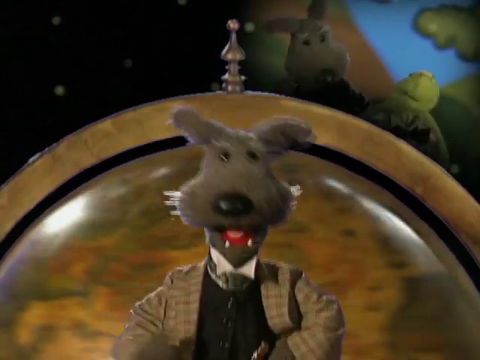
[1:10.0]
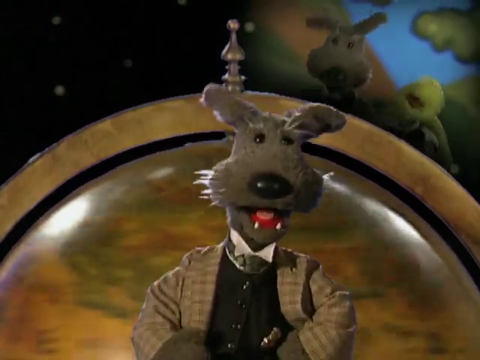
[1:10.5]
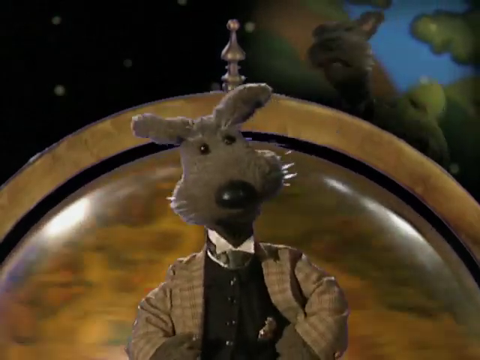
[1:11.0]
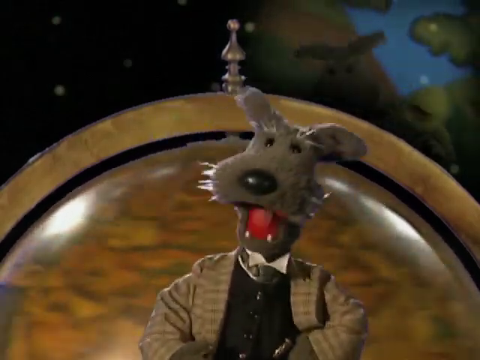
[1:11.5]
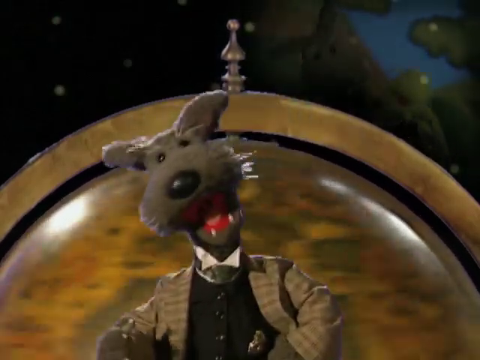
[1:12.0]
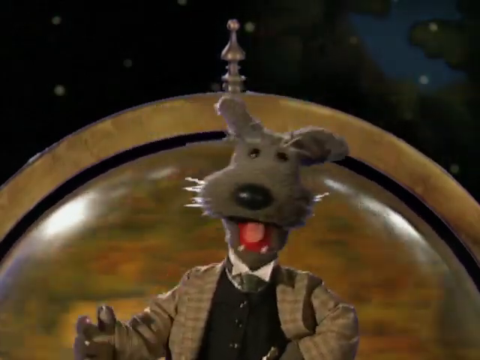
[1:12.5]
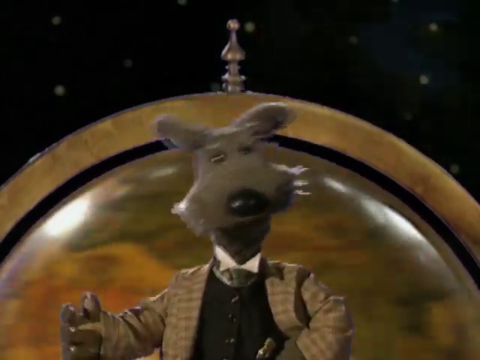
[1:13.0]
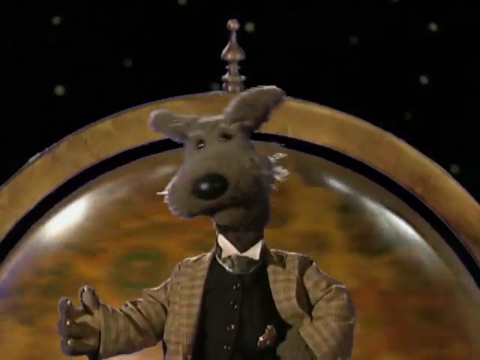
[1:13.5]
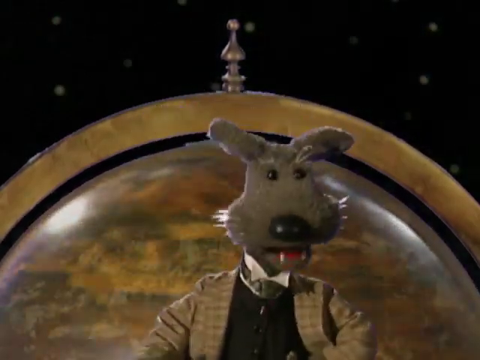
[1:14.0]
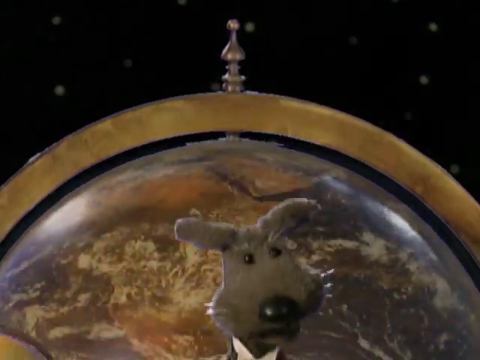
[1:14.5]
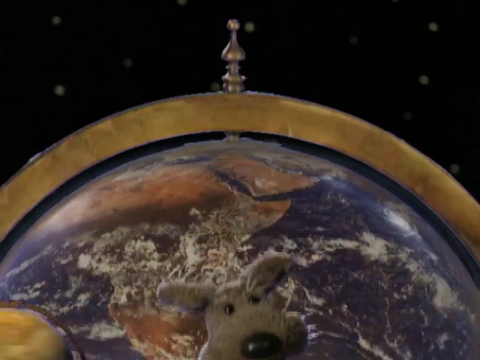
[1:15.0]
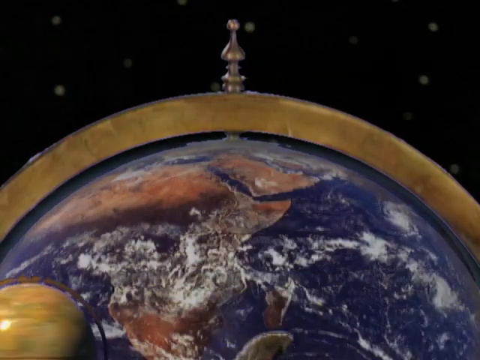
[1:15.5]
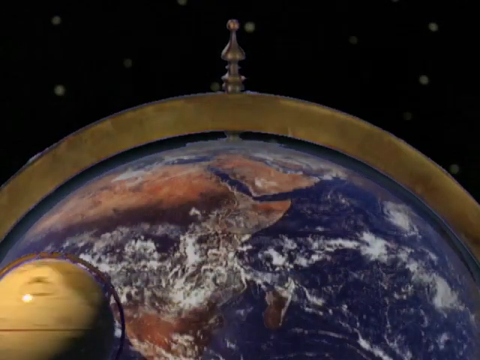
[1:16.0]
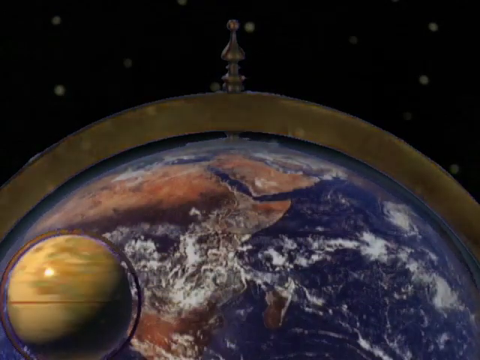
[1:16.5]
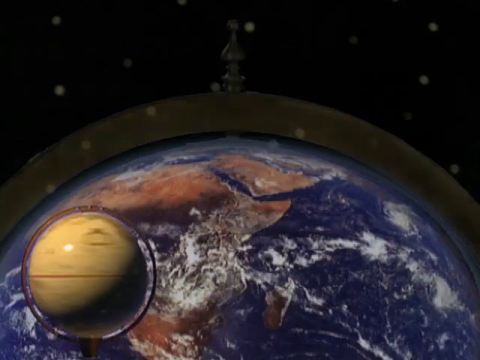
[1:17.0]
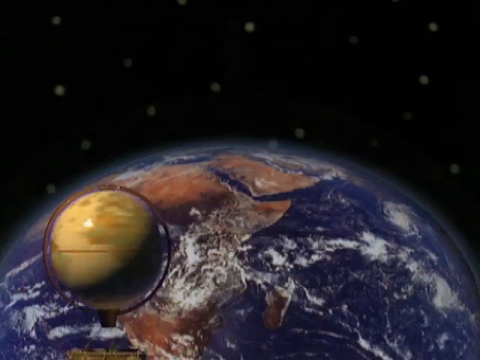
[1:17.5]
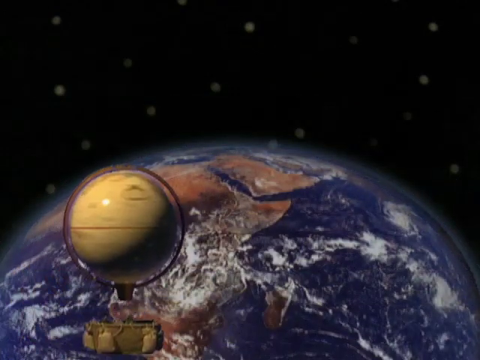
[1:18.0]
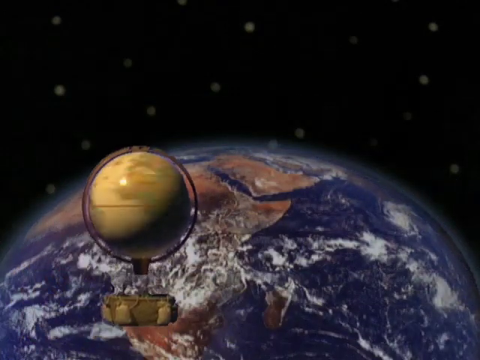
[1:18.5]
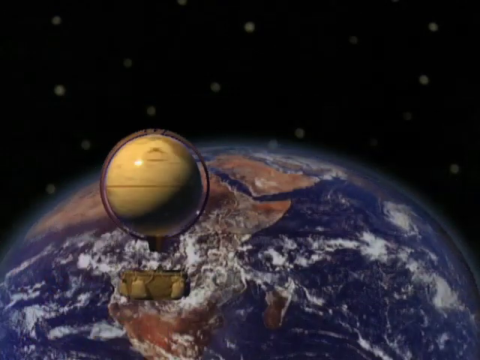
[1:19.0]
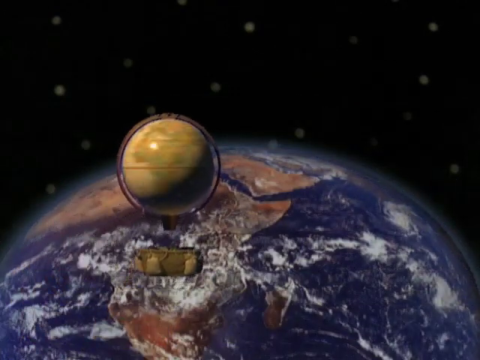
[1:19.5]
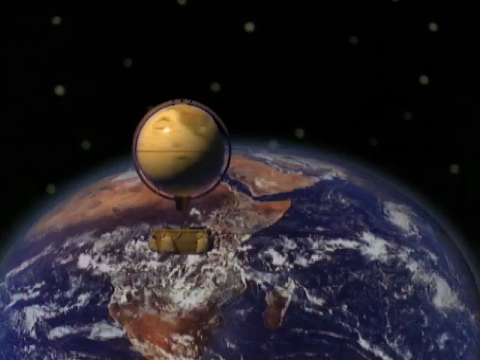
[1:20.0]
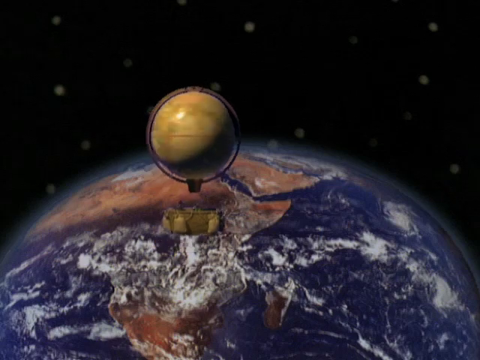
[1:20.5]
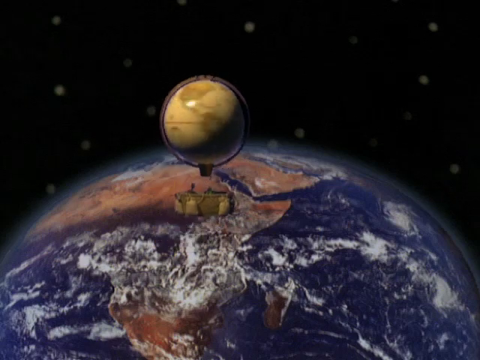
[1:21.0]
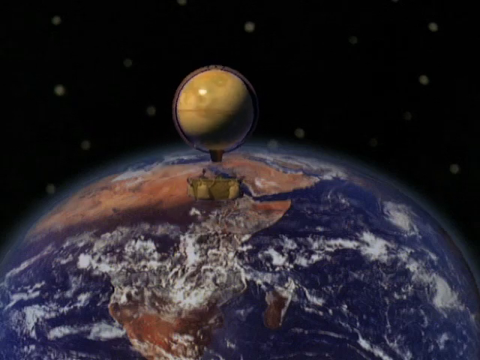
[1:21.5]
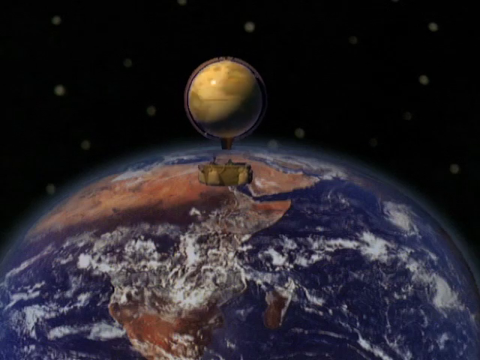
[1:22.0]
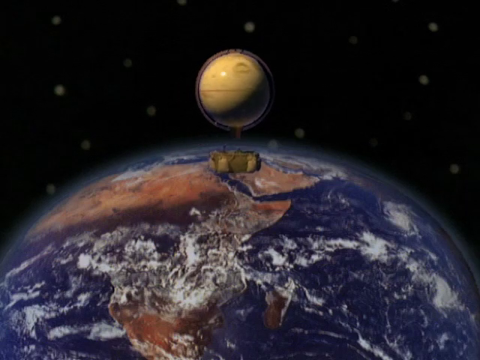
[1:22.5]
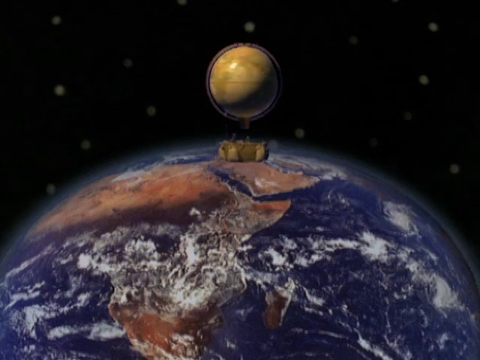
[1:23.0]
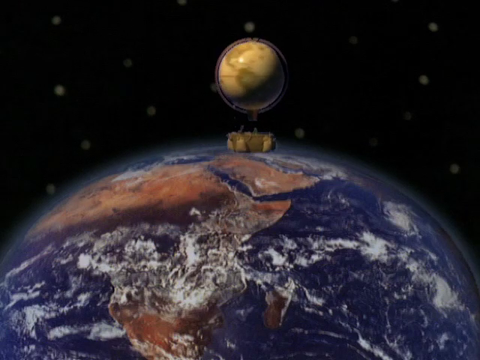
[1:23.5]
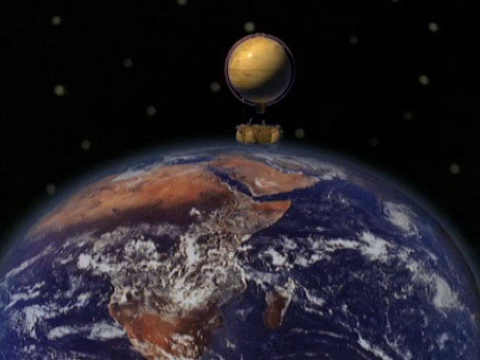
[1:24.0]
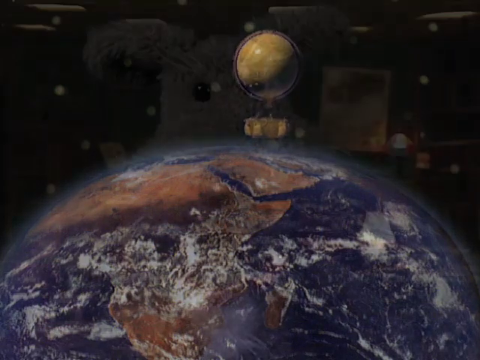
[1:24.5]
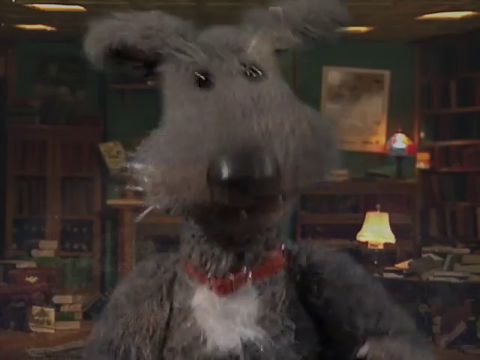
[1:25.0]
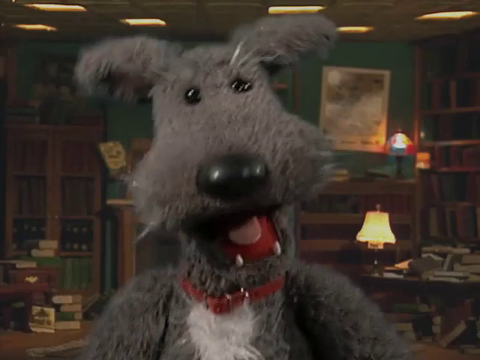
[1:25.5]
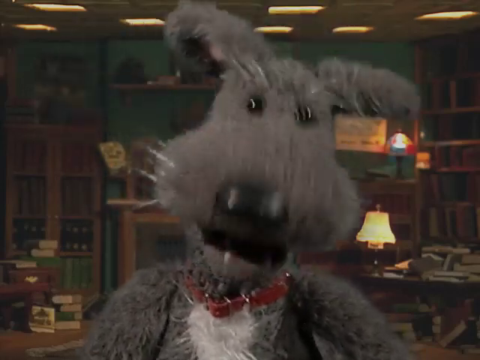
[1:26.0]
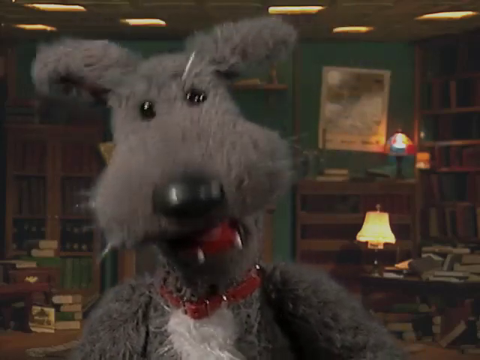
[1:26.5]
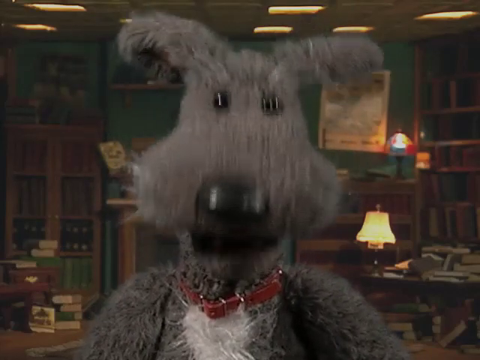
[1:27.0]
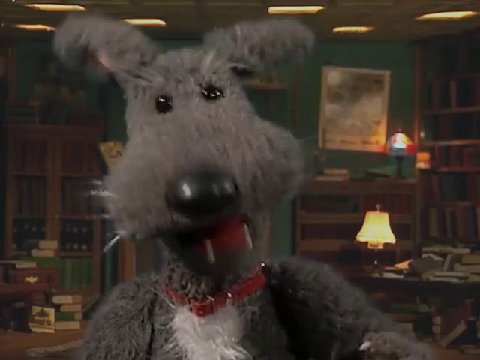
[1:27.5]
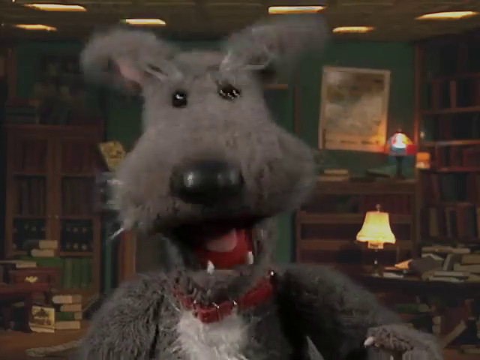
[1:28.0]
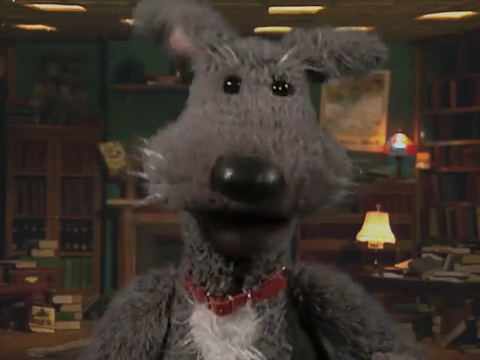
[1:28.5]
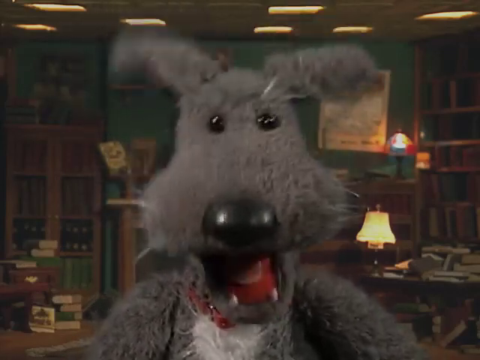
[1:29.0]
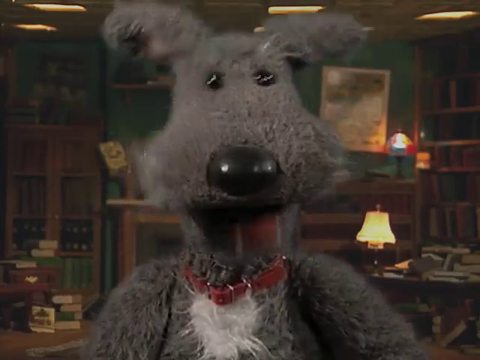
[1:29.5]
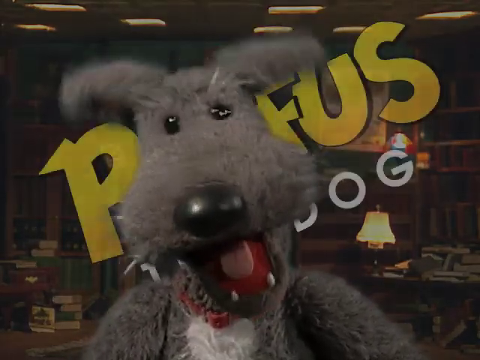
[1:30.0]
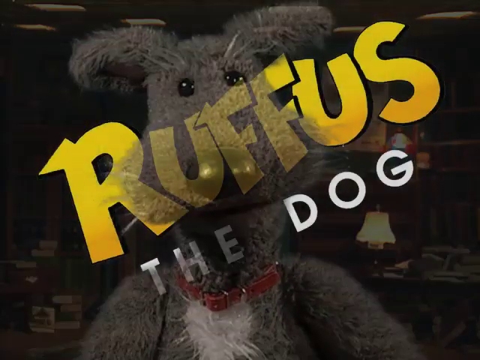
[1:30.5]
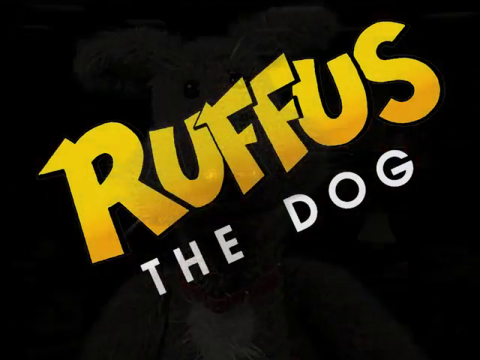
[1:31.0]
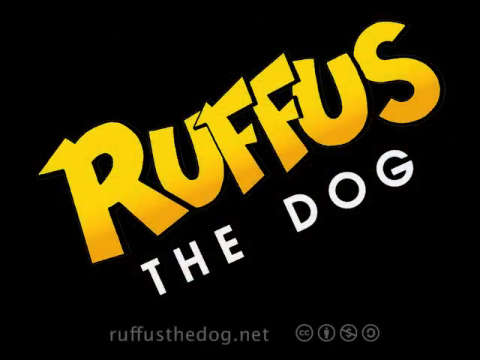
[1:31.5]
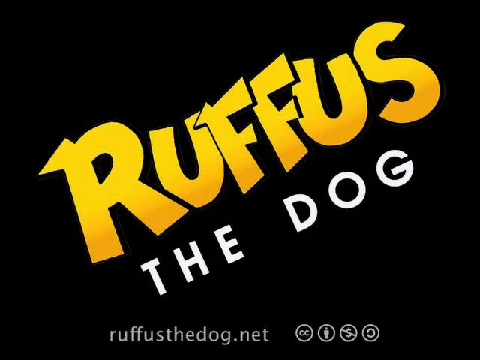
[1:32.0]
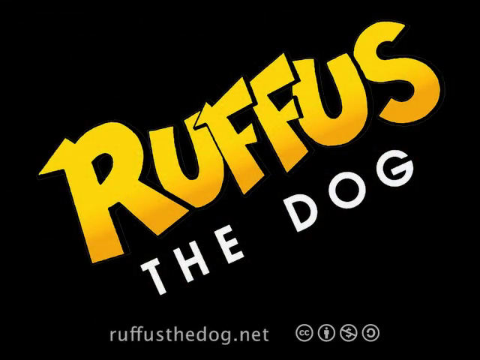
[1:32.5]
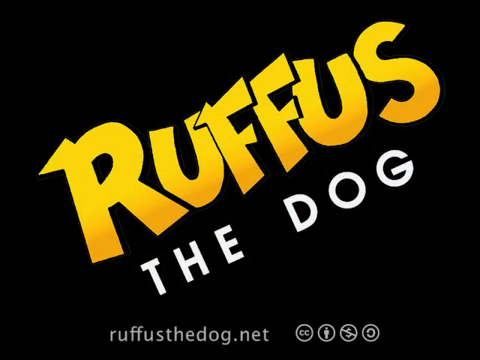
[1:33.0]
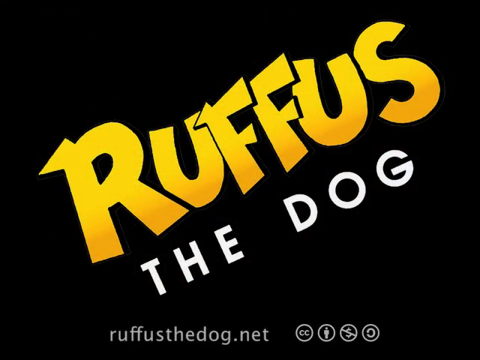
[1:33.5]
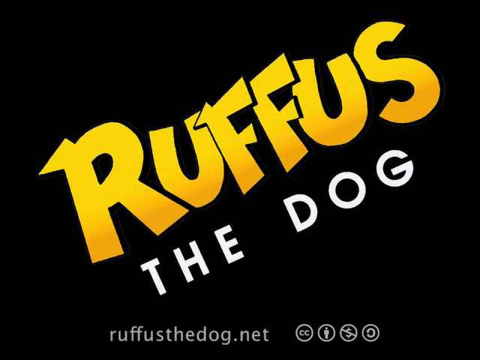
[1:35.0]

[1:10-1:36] A puppet dog faces the screen wearing dress clothes from the neck down. Behind him is a large globe which spins around. In the top right, behind the globe, is an image of the dog with a puppet turtle as they dance. That image fades out into the background while the dog continues to talk to the screen. The dog then lowers and disappears from the video, while the spinning globe turns into a picture of the actual world and a smaller spinning globe moves in from the bottom left of the screen toward the top of the screen. The small spinning globe disappears and the image changes to the cartoon dog in a room with a number of books and a table. The dog looks at the camera, talking and making excited gestures with his mouth. A title comes up reading "Ruffus the dog" on a black background.